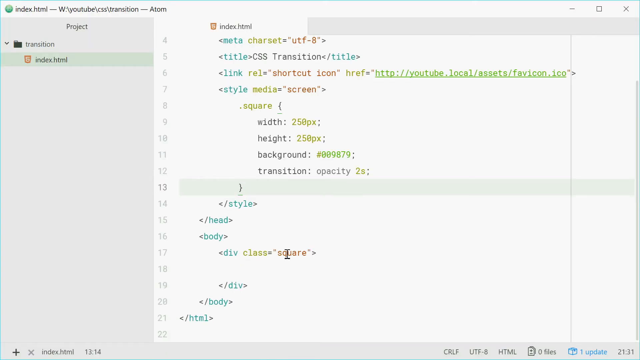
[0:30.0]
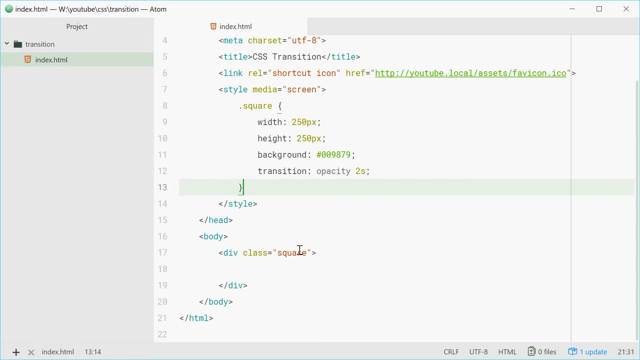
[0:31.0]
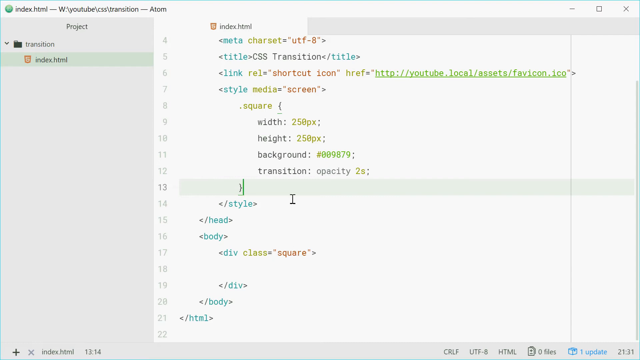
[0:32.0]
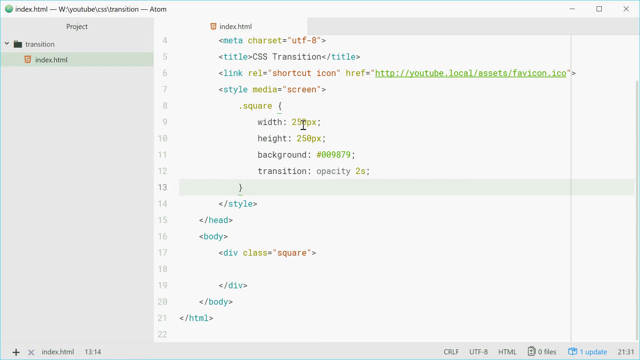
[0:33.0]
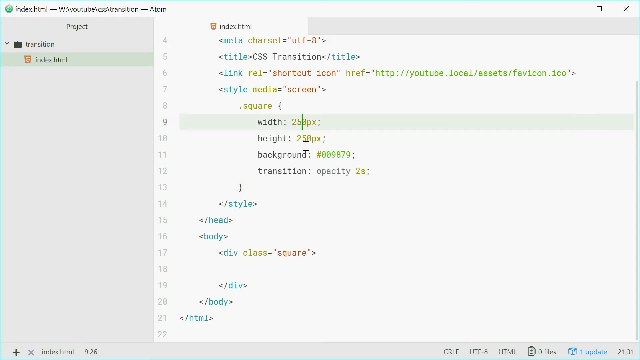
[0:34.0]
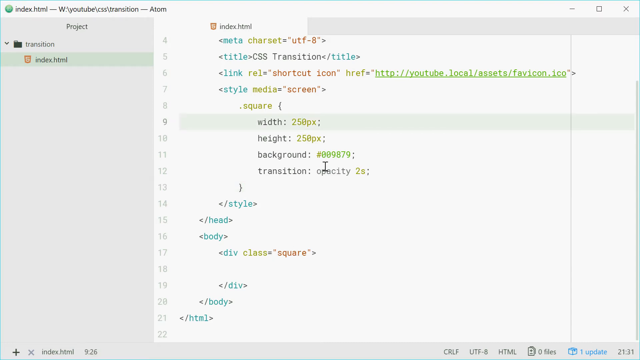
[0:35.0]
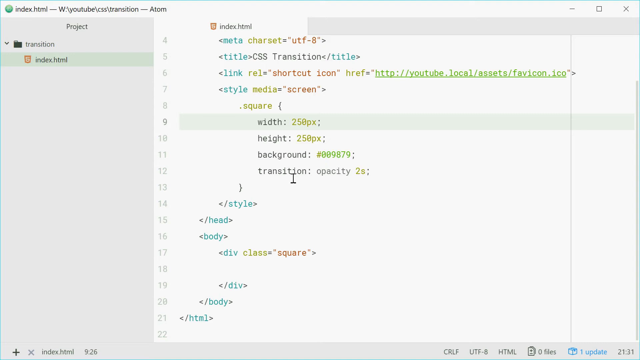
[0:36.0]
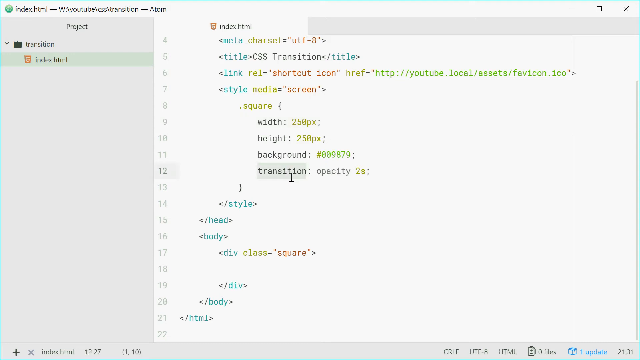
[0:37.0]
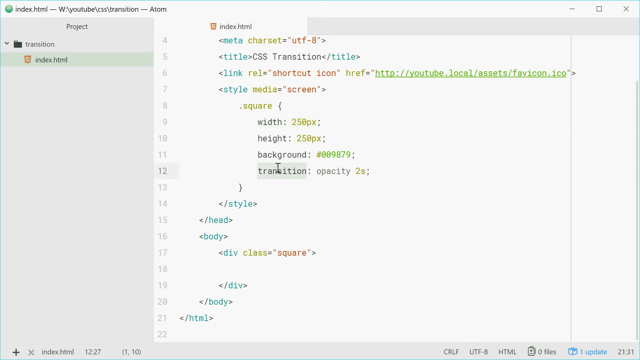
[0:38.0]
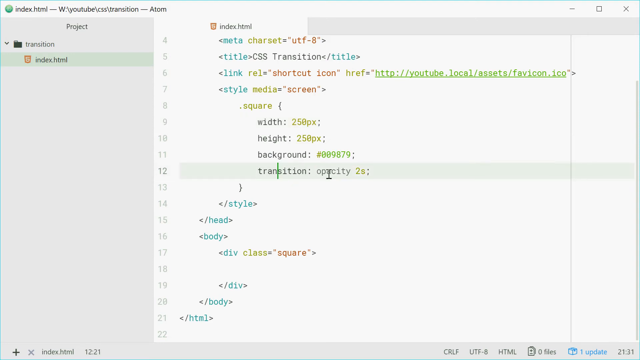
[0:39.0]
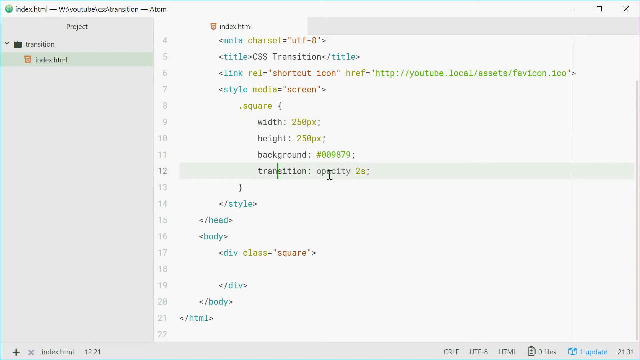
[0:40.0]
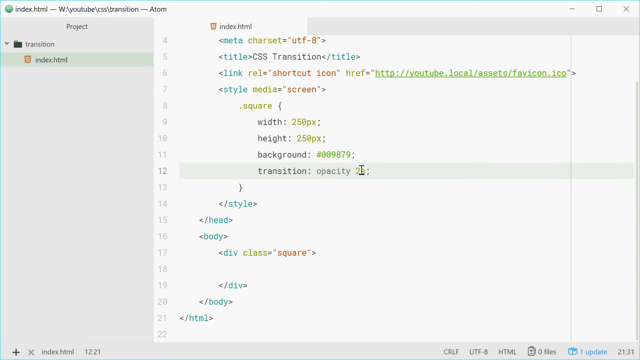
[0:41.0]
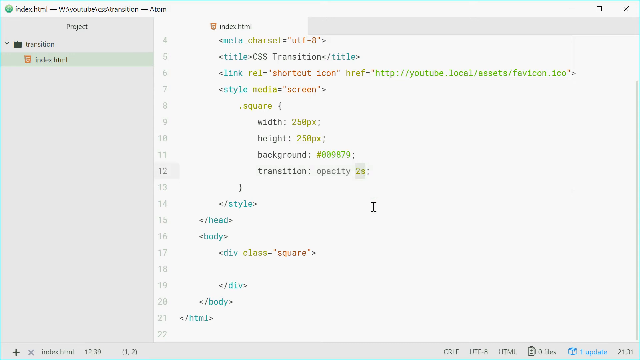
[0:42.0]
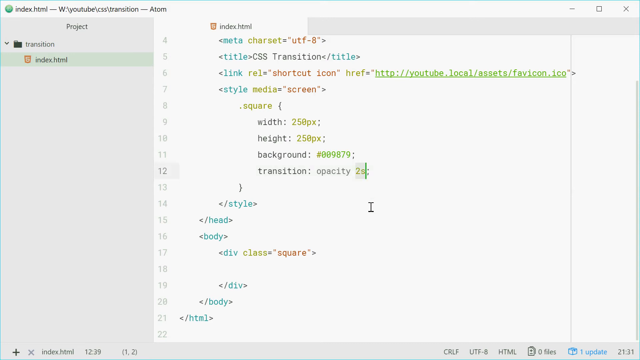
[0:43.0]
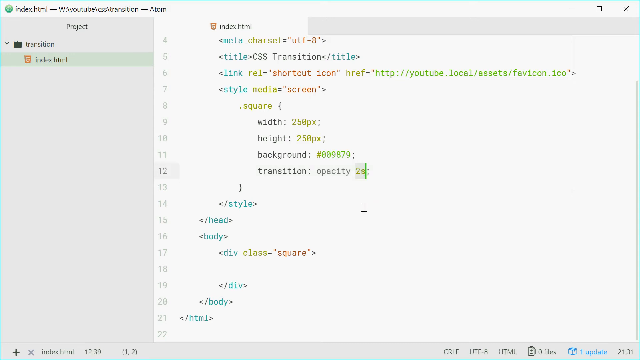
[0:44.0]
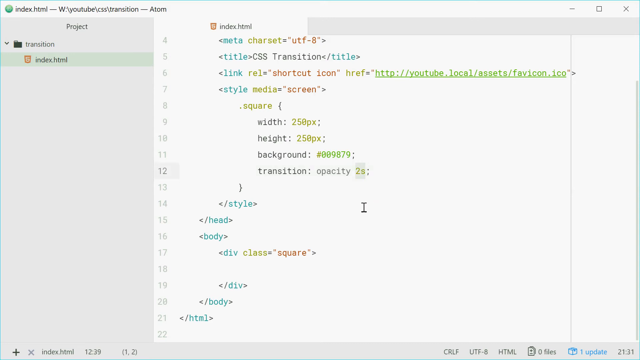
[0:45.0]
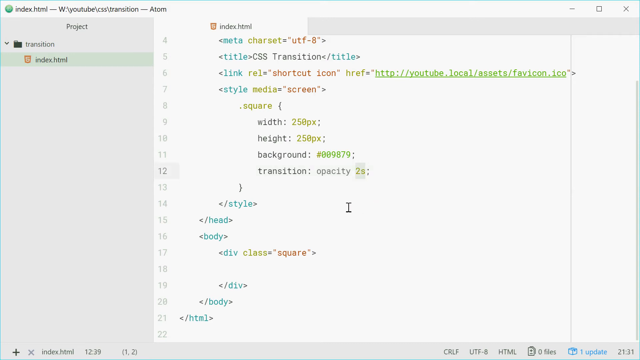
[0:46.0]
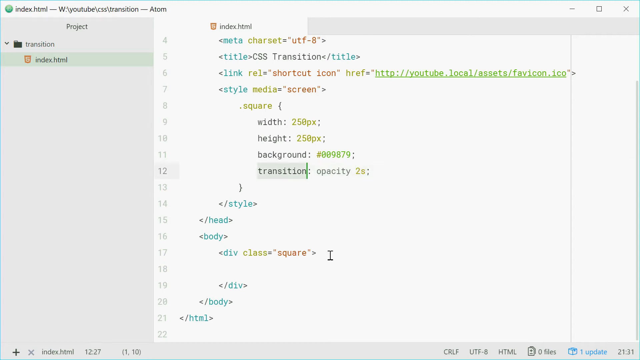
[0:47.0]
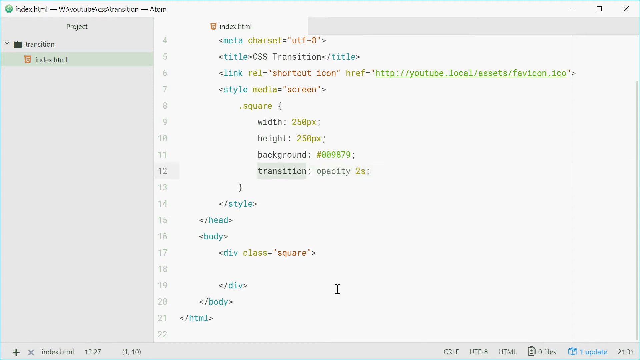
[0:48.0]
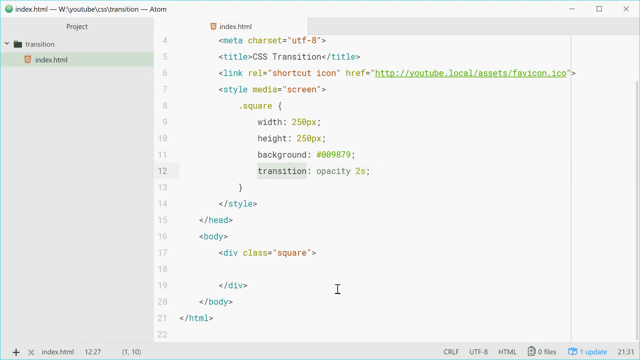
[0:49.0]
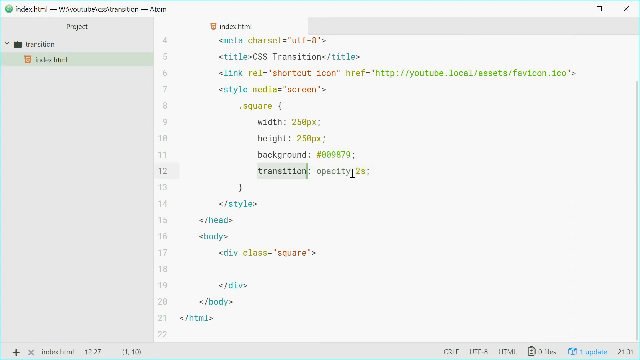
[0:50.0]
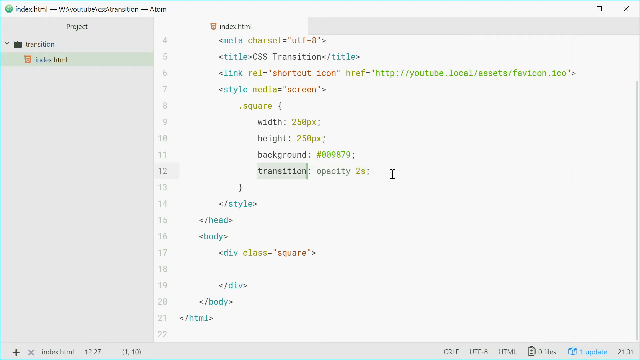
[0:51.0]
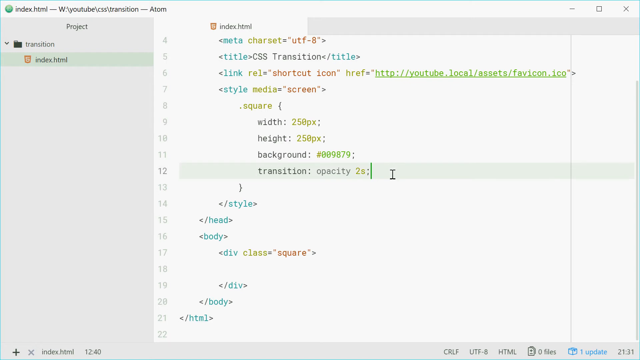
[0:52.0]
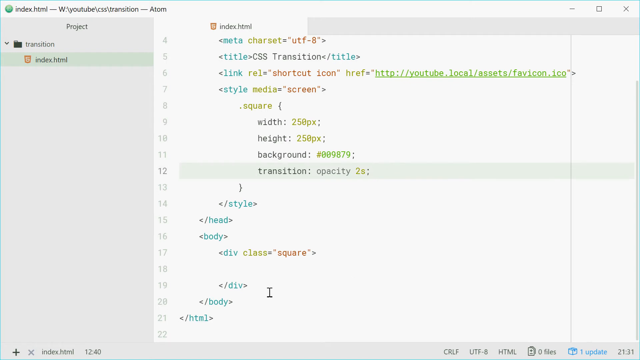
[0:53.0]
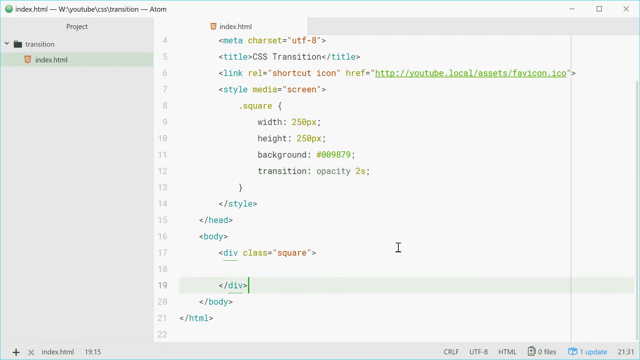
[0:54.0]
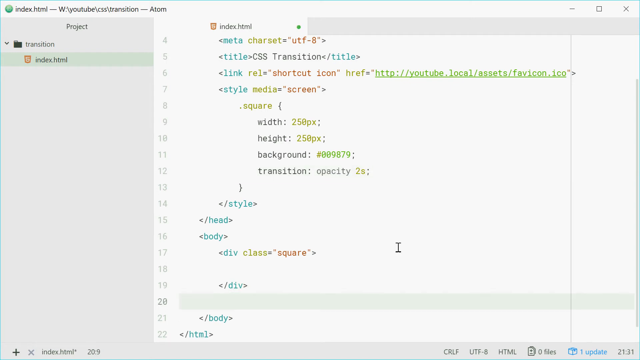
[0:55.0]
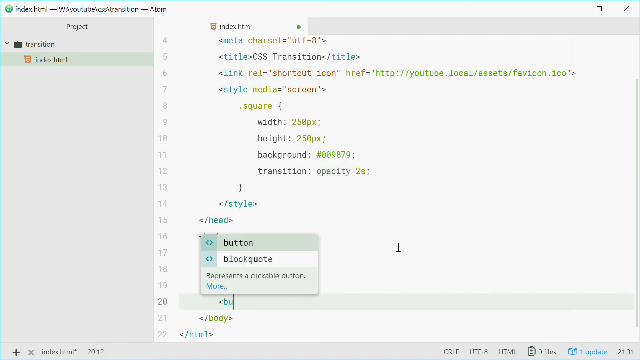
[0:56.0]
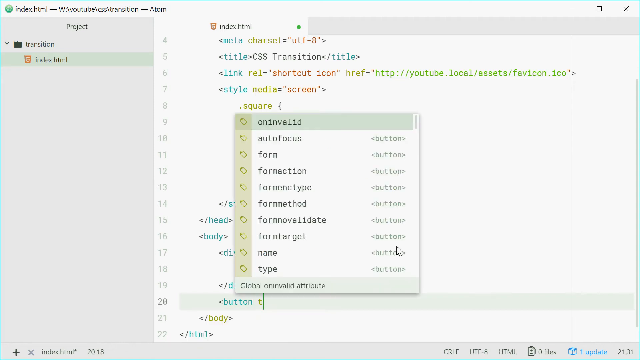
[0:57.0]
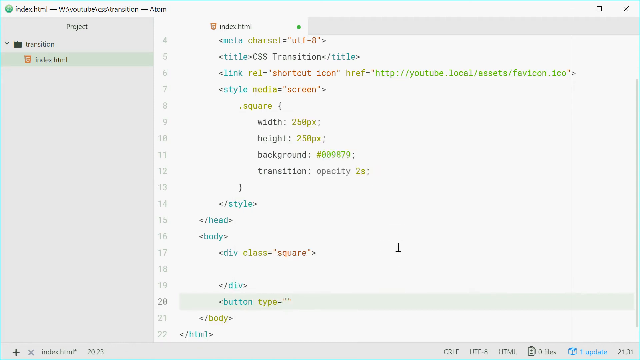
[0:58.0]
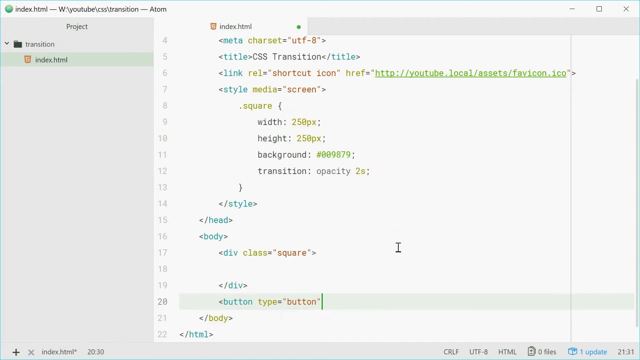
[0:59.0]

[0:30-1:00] A code editor shows index.html with a title reading "index.html - youtubes - css - transition - atom". On one side is a project folder column with a transition folder and index. The code in index.html includes a meta charset utf-8 line, a title reading css transition, a shortcut icon link with a YouTube link, and a style section with a square that appears to be 250 high, a background of 009879, and a transition on opacity of two seconds, followed by head, body and a division for the square. The man moves into the code to the transition line and to opacity as if about to edit the two seconds, goes back to transition, clicks as if about to type, and goes back again.